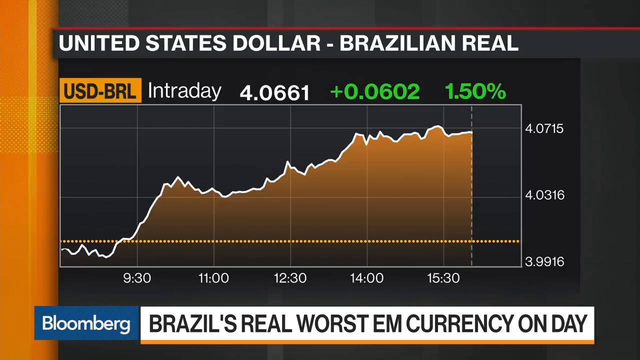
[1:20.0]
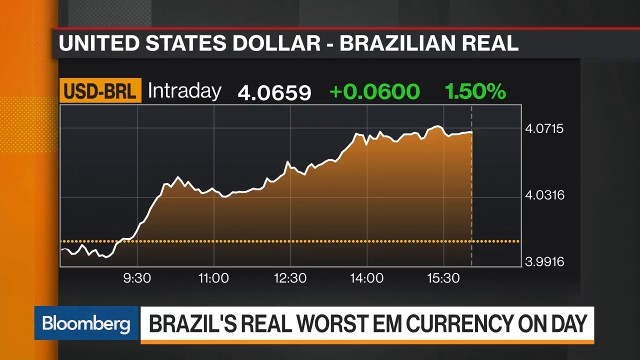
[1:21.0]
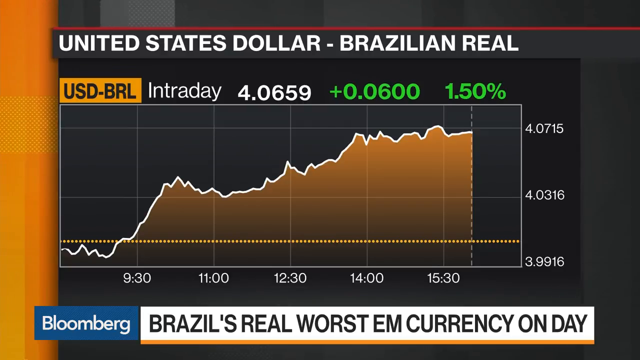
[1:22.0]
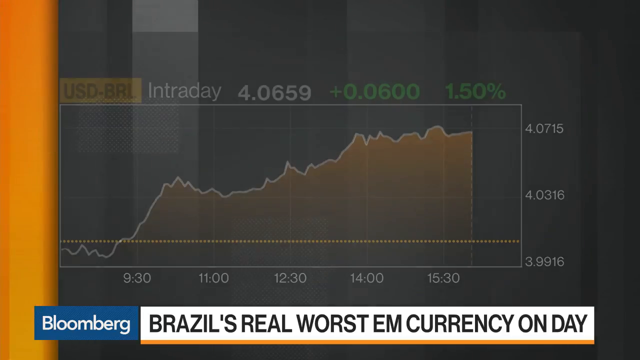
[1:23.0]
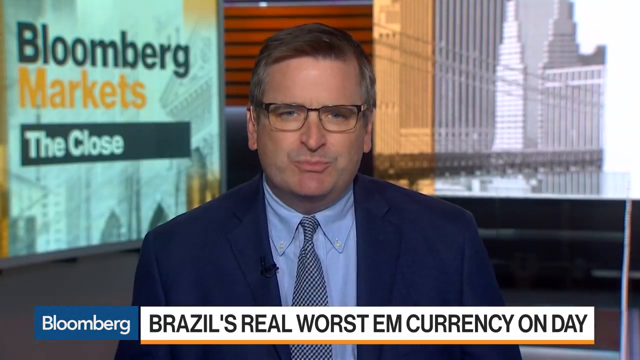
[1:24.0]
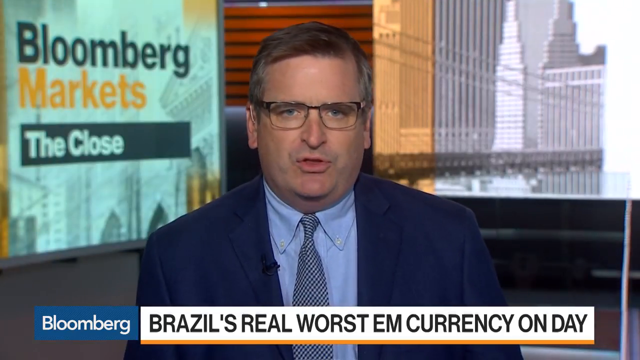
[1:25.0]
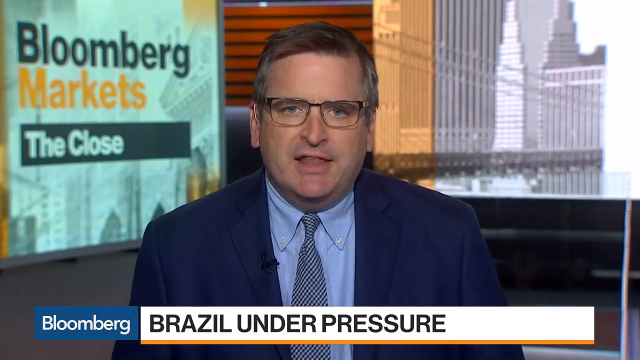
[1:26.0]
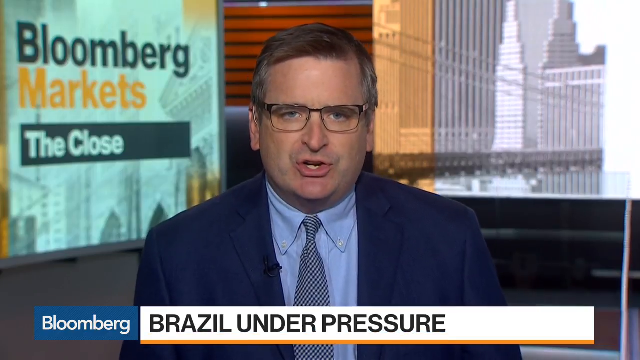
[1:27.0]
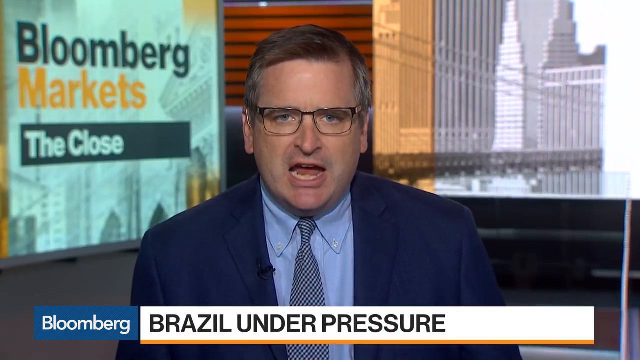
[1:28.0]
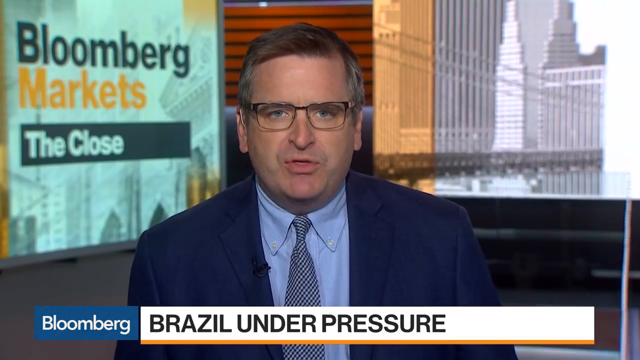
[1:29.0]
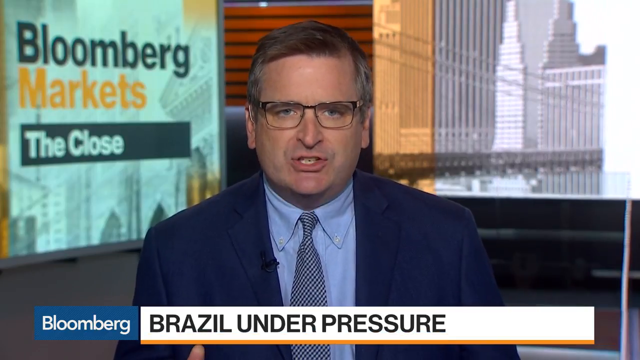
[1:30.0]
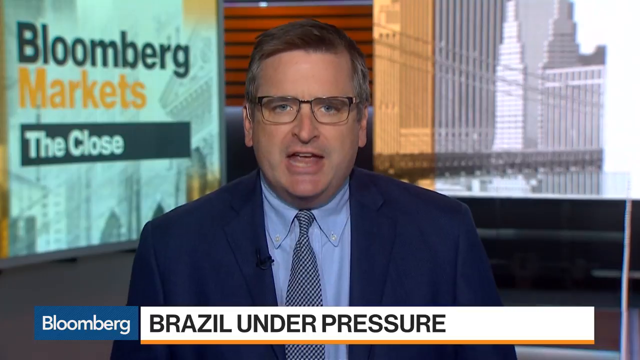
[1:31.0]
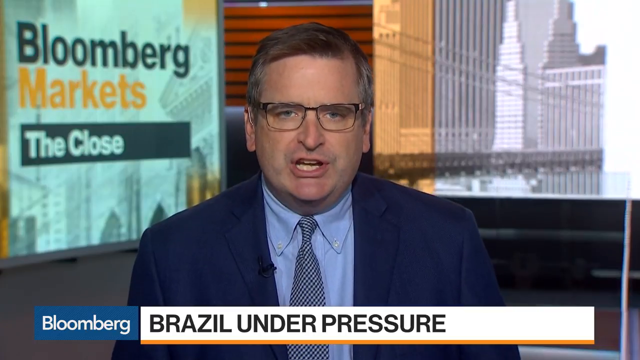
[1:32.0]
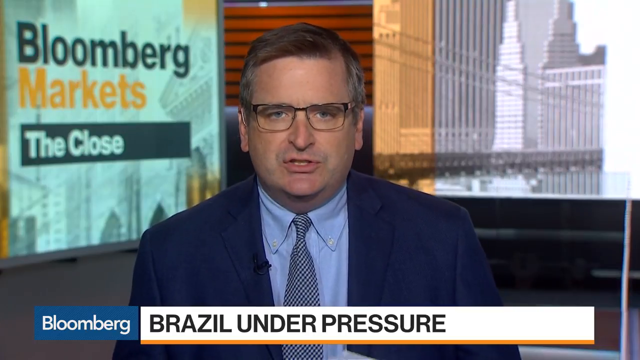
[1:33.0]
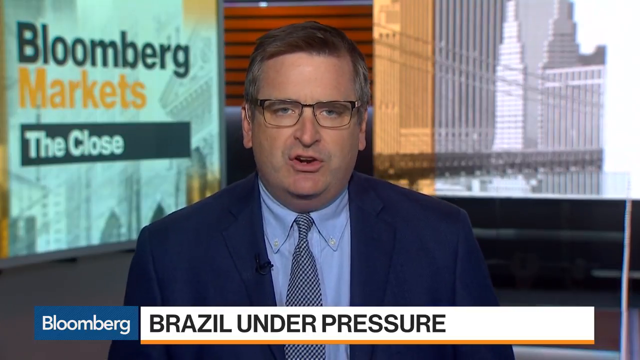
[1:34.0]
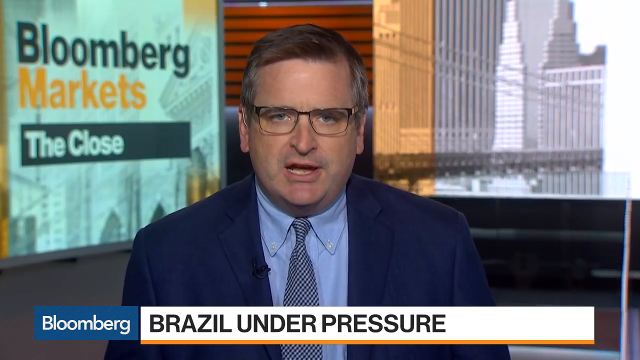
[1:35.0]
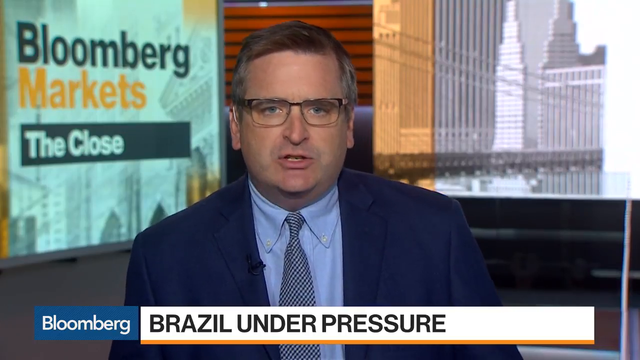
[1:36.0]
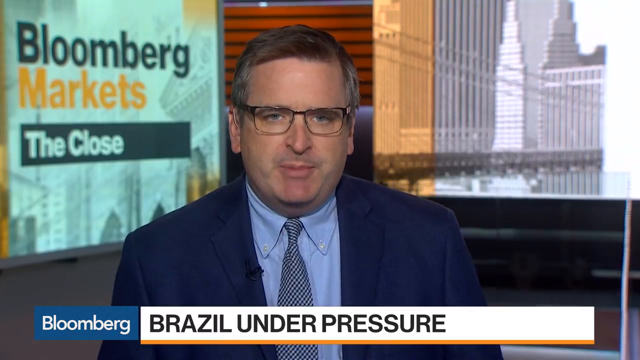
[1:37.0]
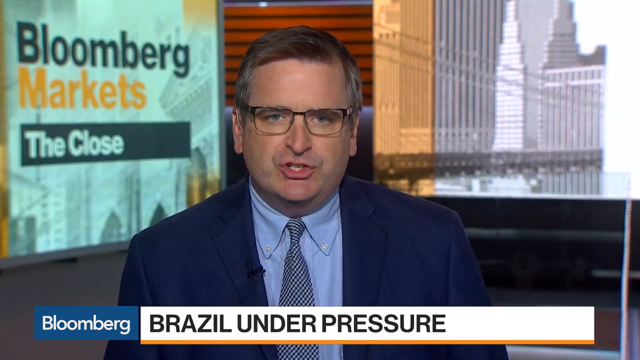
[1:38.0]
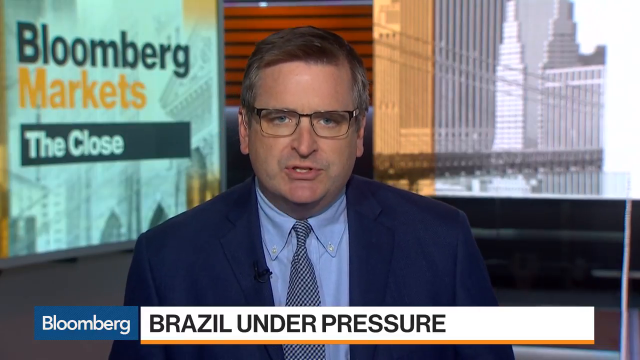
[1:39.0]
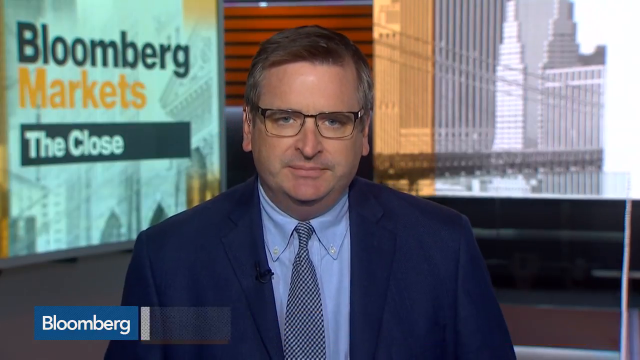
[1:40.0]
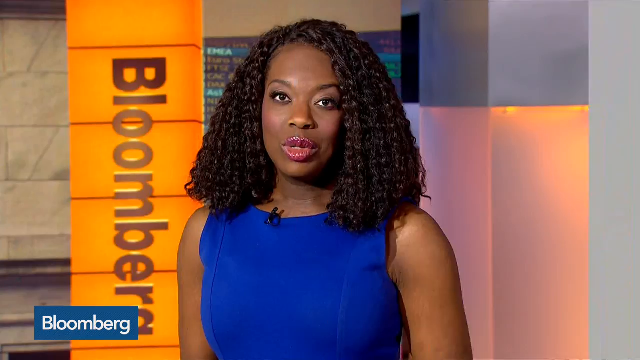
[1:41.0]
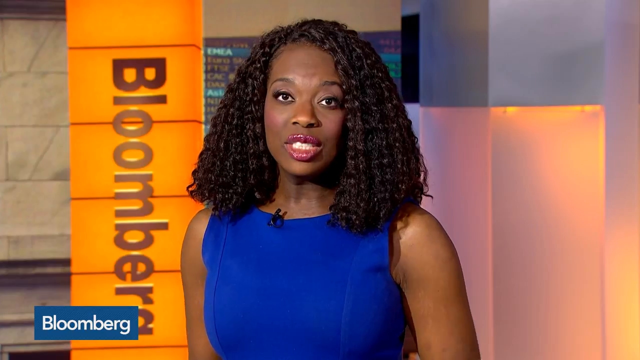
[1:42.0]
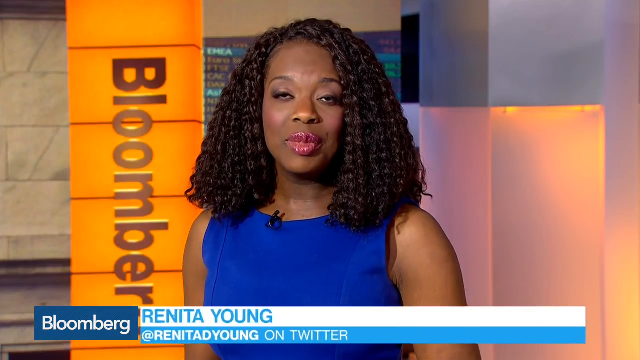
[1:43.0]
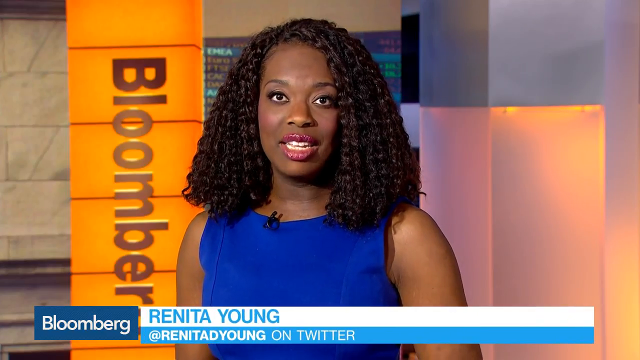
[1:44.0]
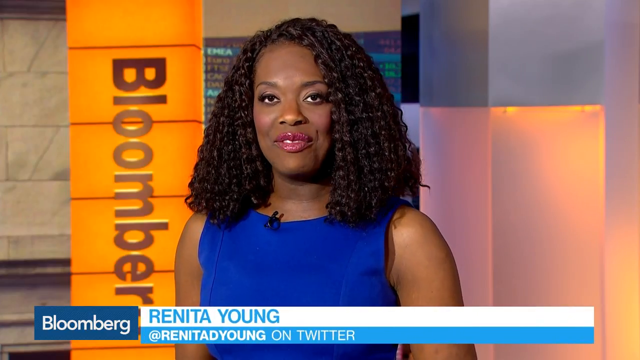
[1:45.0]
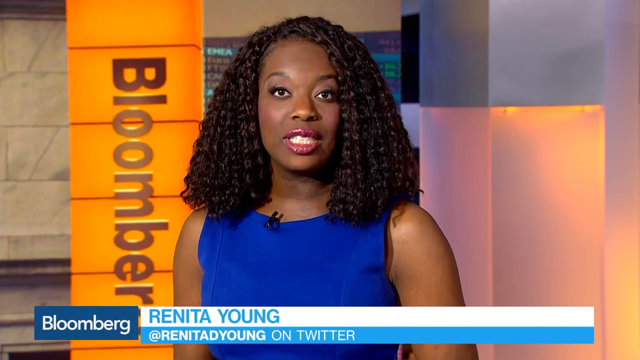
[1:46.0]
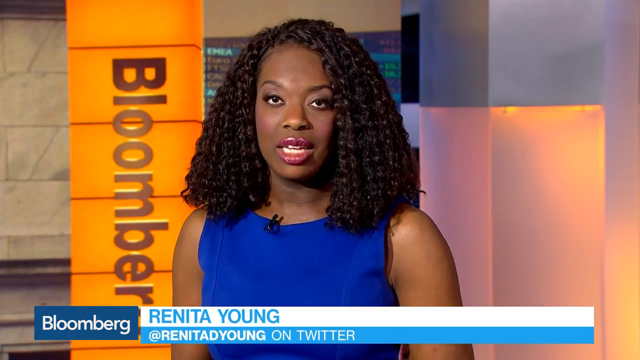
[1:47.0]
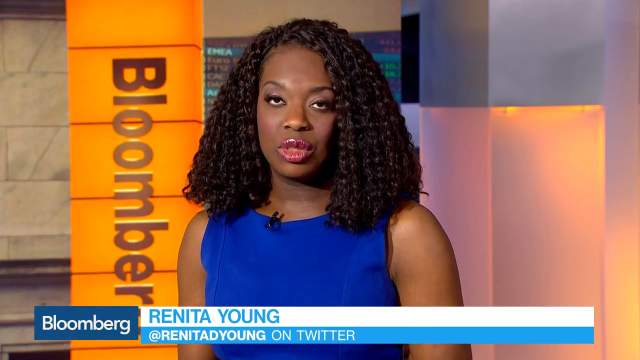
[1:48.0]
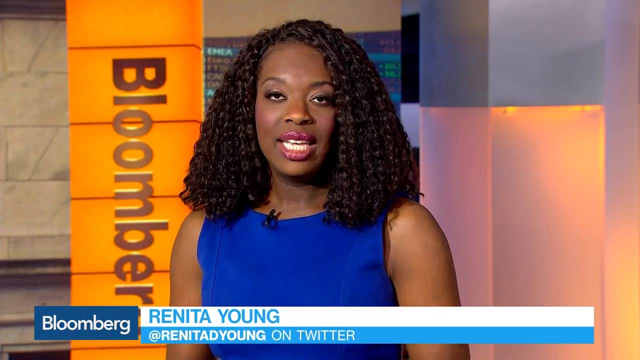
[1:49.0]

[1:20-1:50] A statistics chart in the center of the screen is titled "United States Dollar - Brazilian Real" in white lettering. At the top, an orange banner in black lettering reads "USD-BRL," followed in white by "Intraday" and "4.0659," and in green by "+0.0600" and "1.50%." The horizontal axis runs from 9.30 to 15.30, and the vertical axis from 3.9916 up to 4.0715. Near 9.30 the line is down toward 3.9916; closer to 11 it is above the 4.0316 mark; further along it is closer to 4.0715 and stays there up to 15.30. Black text at the bottom center reads "Brazil's real worst EM currency on day," and a blue banner on the left reads "Bloomberg" in white text. The scene transitions to a light-skinned man with dark brown, graying hair, wearing glasses, a blue suit, a light blue shirt and a checkered blue tie, talking fervently toward the camera at the center of the screen, with a Bloomberg markets graphic over his shoulder. Next is a dark-skinned woman with dark brown hair in a blue dress; over her right shoulder an orange banner reads "Bloomberg" in orange lettering. Blue text at the bottom reads "Renita Young" as she talks into the camera.